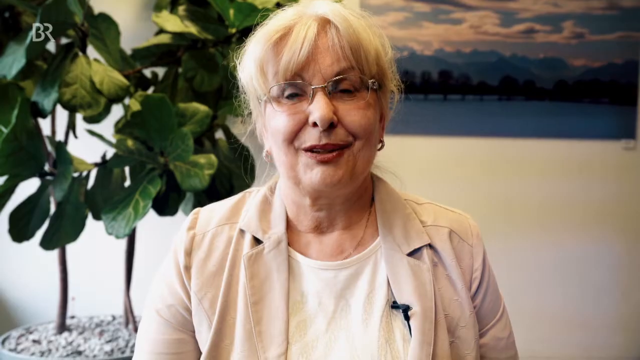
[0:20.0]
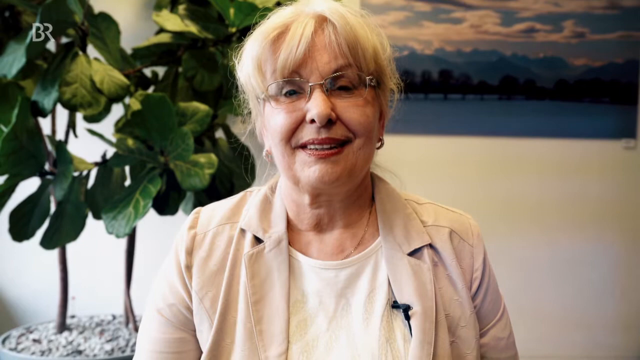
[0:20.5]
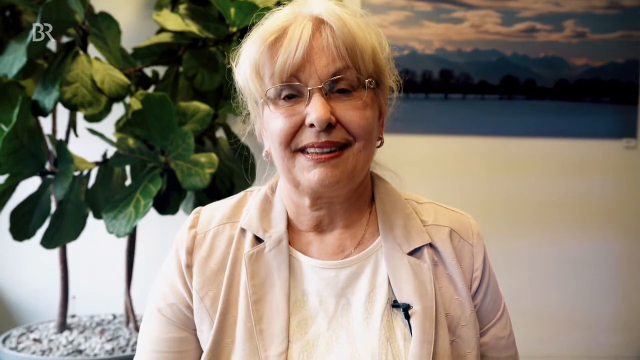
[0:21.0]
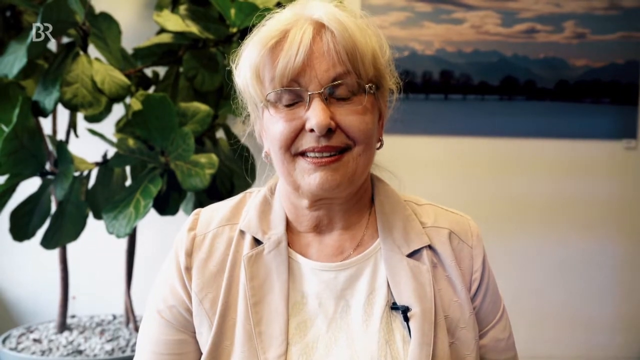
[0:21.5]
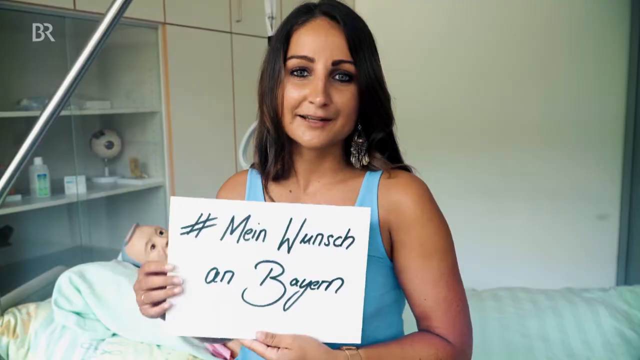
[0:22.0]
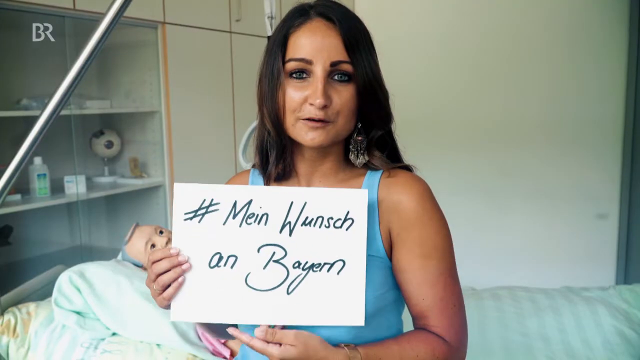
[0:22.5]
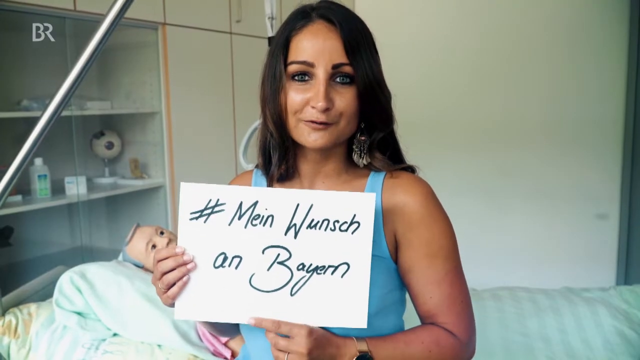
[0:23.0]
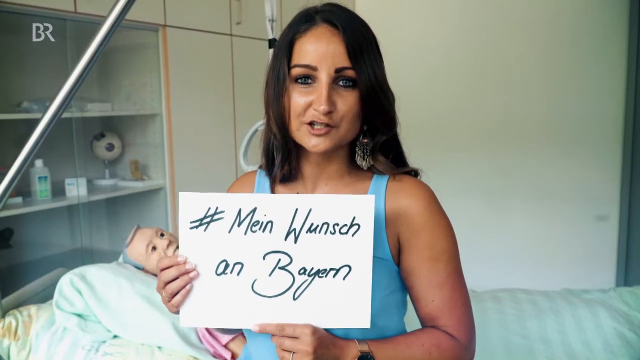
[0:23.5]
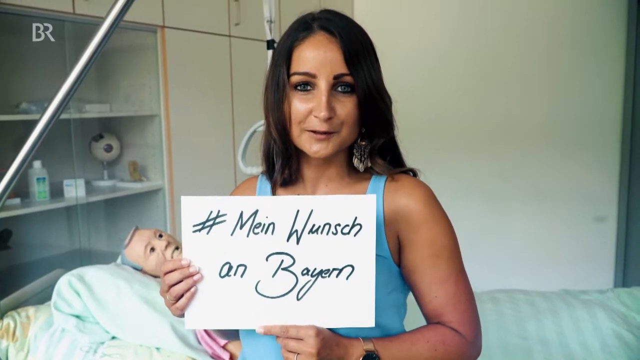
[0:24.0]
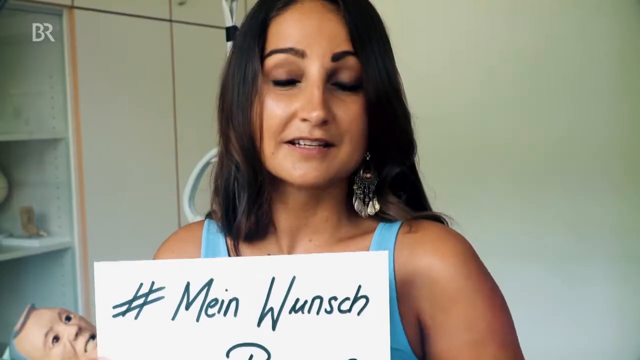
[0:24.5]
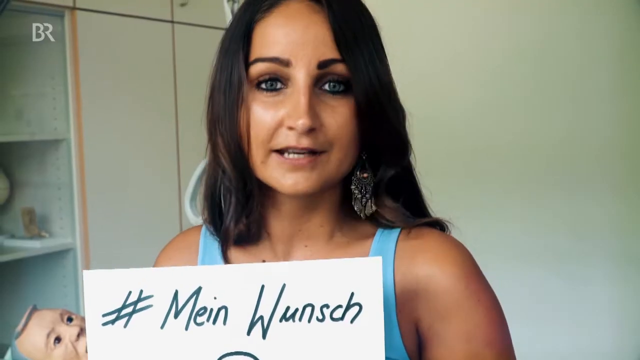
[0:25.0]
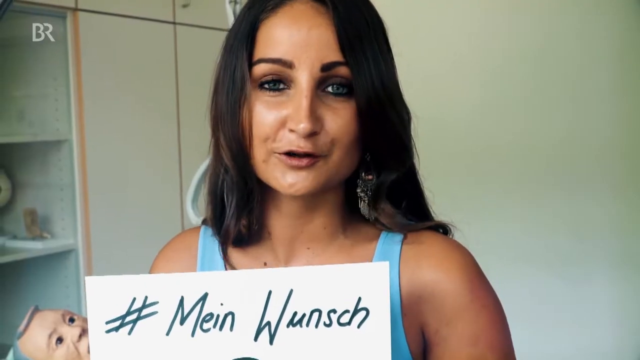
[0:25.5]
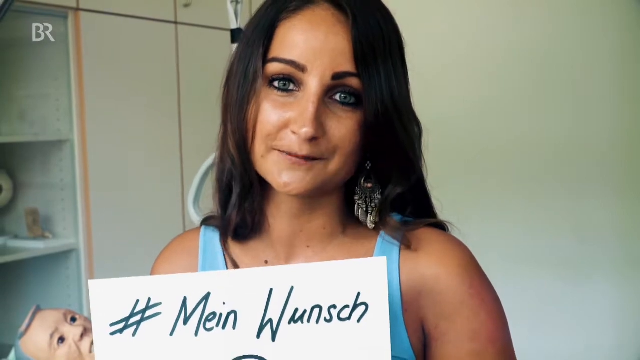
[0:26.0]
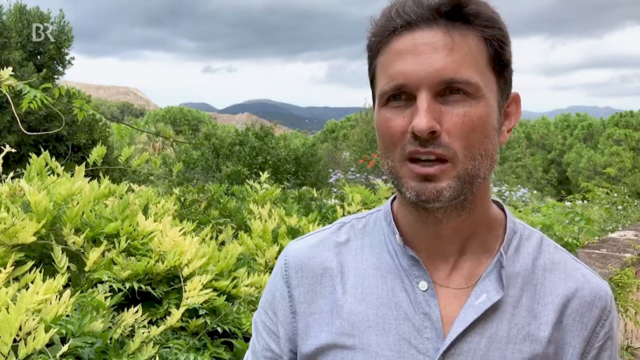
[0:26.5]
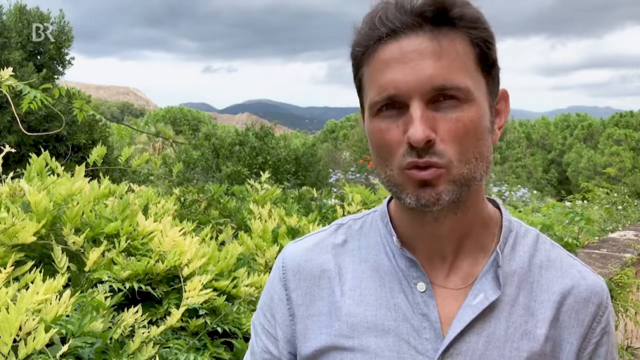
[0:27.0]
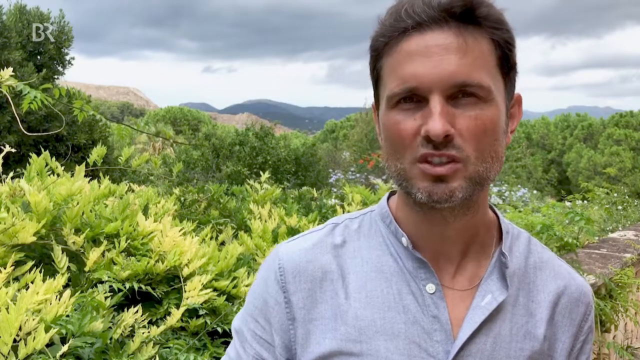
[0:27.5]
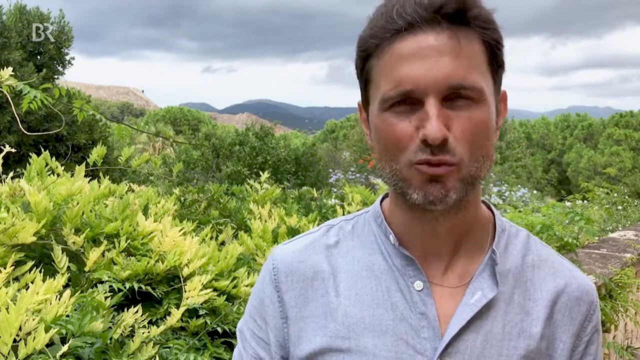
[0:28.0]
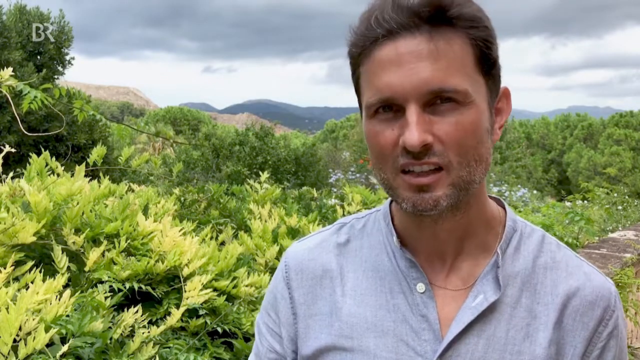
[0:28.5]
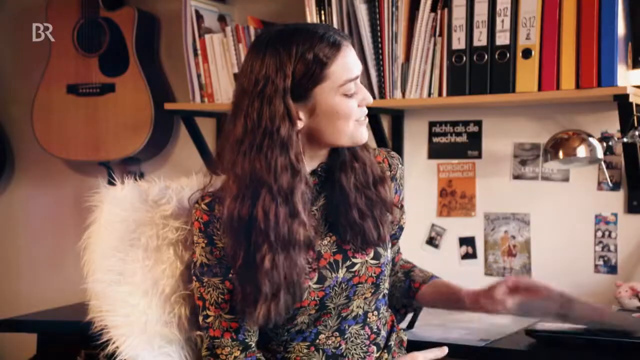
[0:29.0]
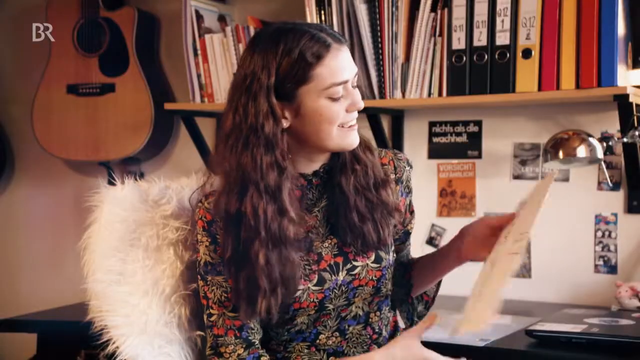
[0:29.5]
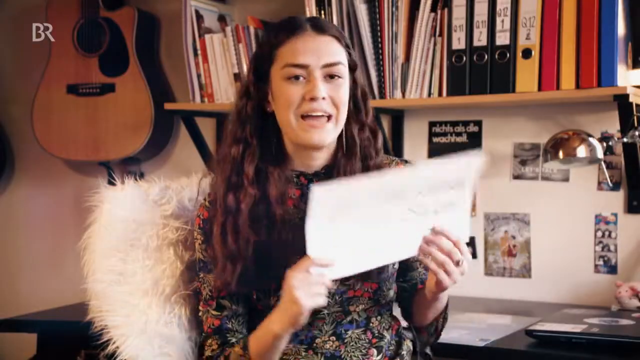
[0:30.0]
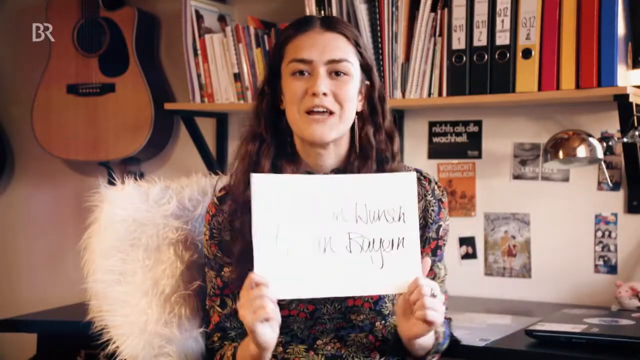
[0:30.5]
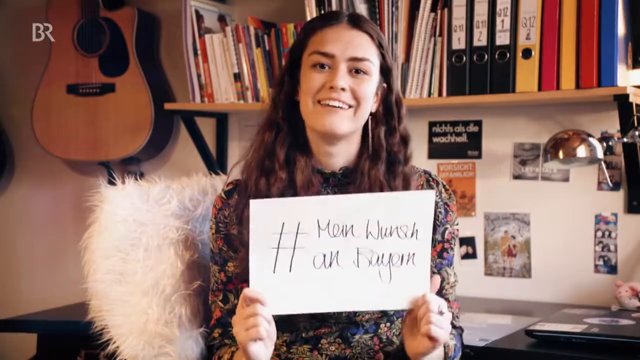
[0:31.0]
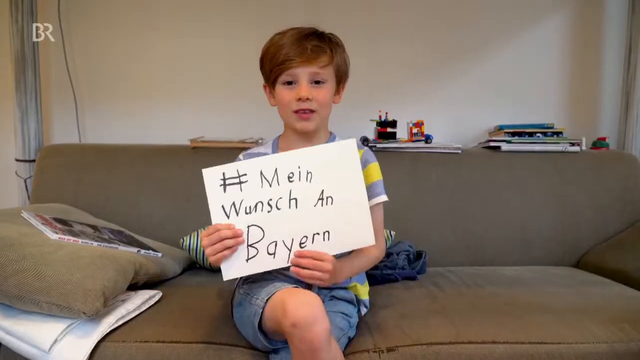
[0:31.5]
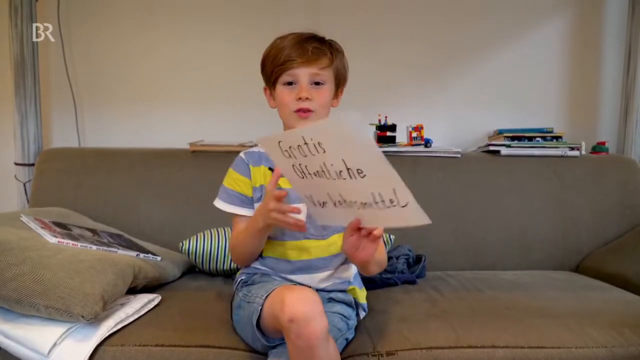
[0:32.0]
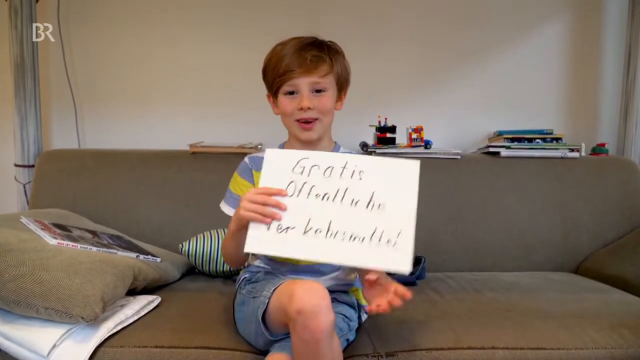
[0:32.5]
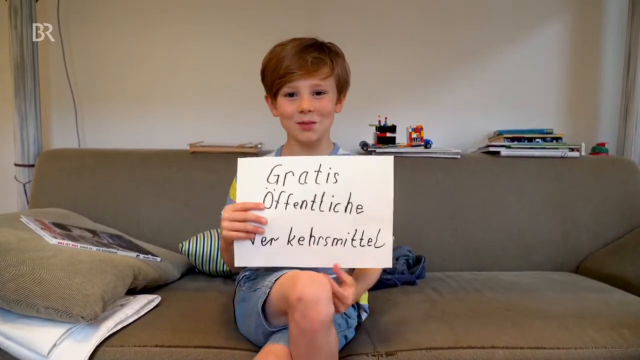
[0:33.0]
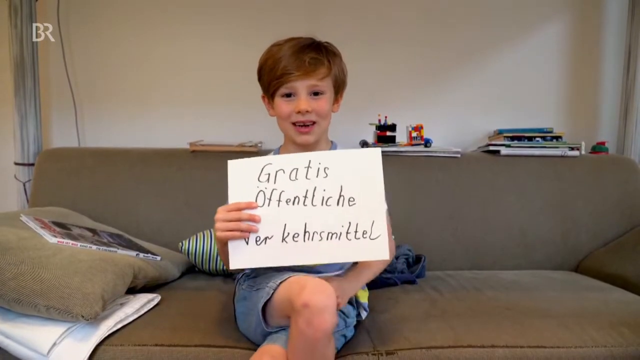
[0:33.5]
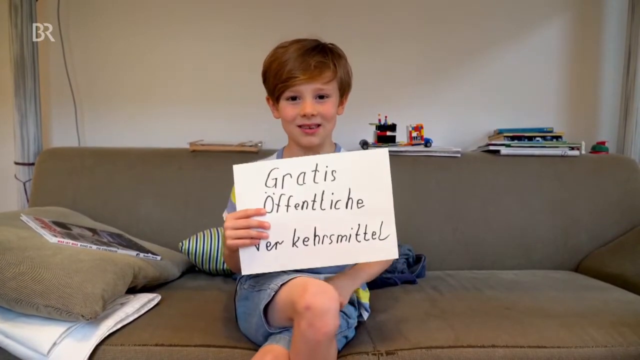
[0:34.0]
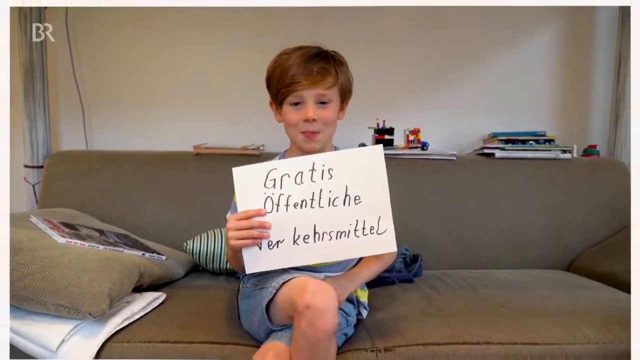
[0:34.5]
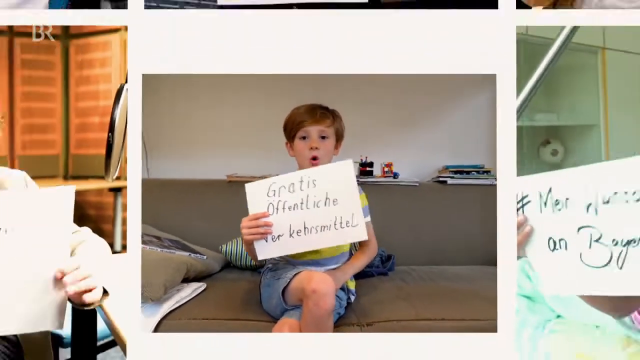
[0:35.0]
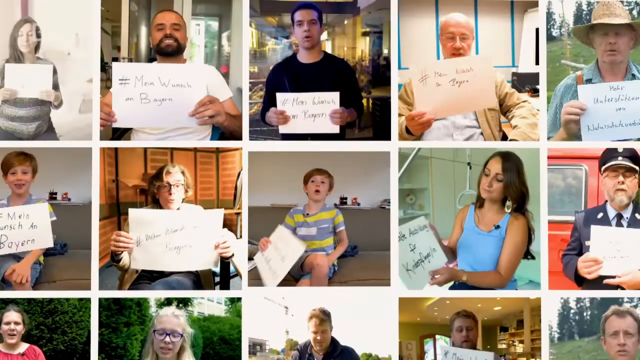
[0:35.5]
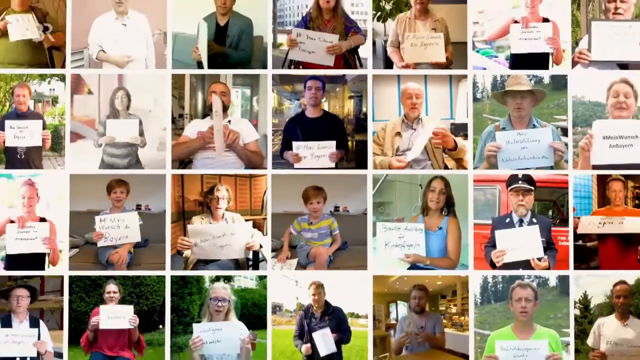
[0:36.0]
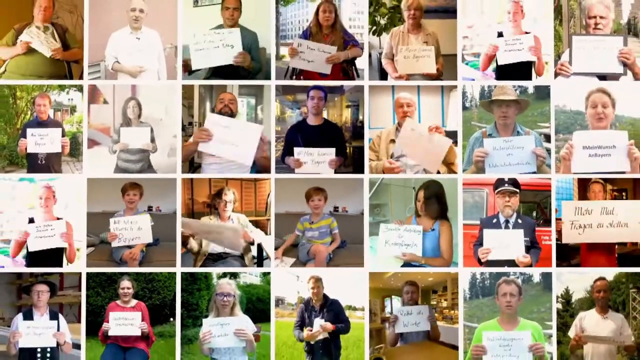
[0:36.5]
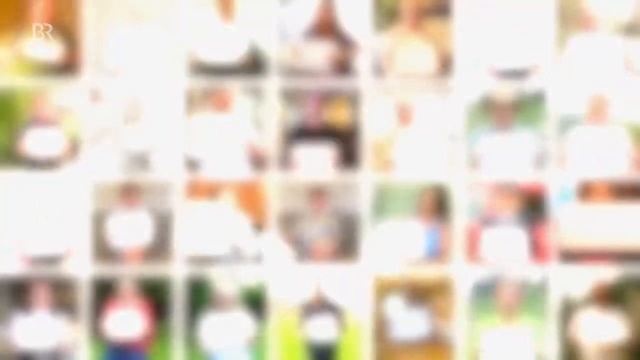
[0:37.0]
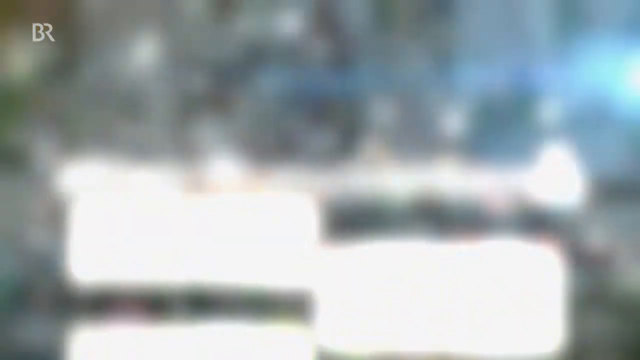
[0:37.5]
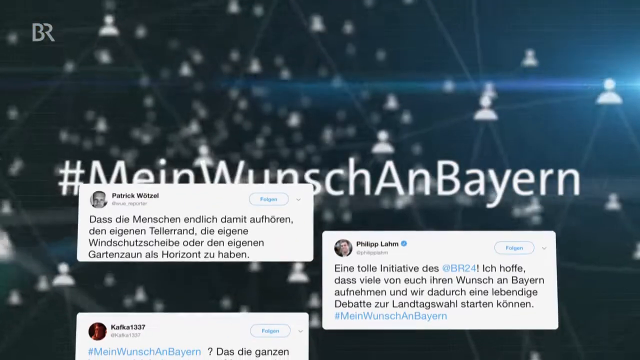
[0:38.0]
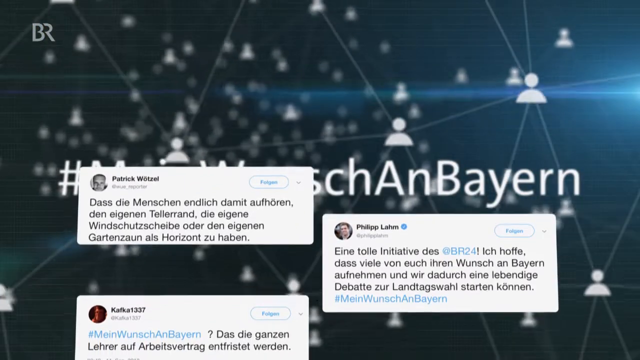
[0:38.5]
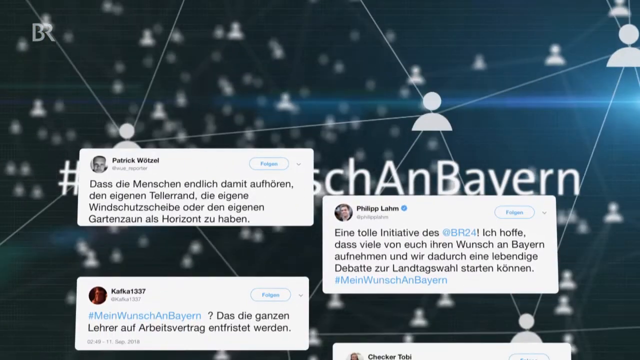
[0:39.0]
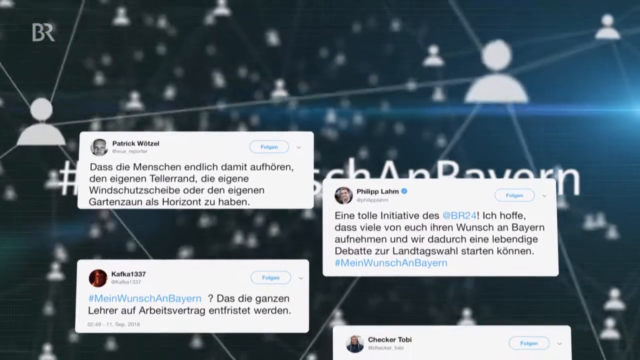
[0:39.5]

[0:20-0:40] The video is in German and is about Bayern. Different people hold up signs, such as a woman whose sign says "#Mein Wunsch an Bayern". A man is shown talking, then a woman with the same hashtag, then a little boy holding it too. The boy turns his sign over to show different German text. The view then opens up so that 28 different people appear on screen at the same time, all holding up signs; some say the same thing and some say different things. The screen then changes to one with tweets on it, with "#Mein Wunsch an Bayern" in the background, and the tweets, in German, move up the screen.